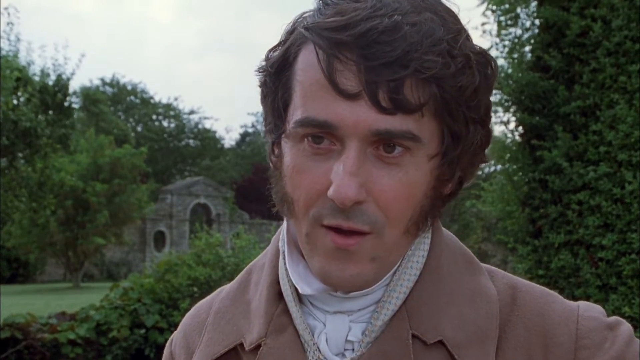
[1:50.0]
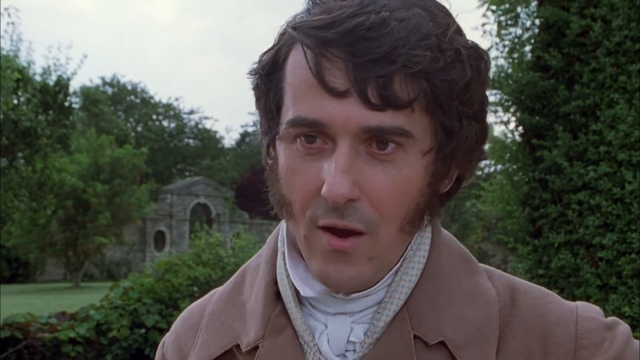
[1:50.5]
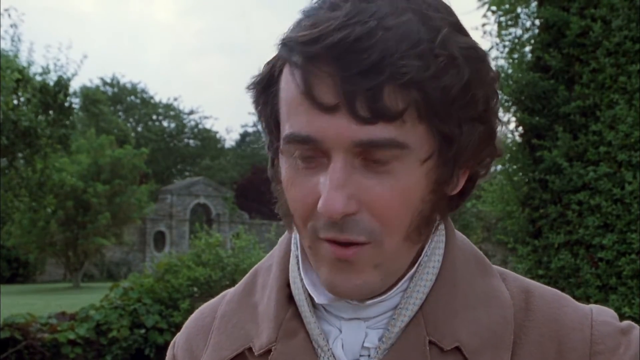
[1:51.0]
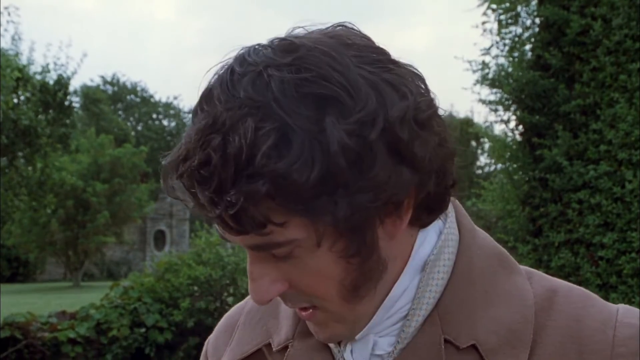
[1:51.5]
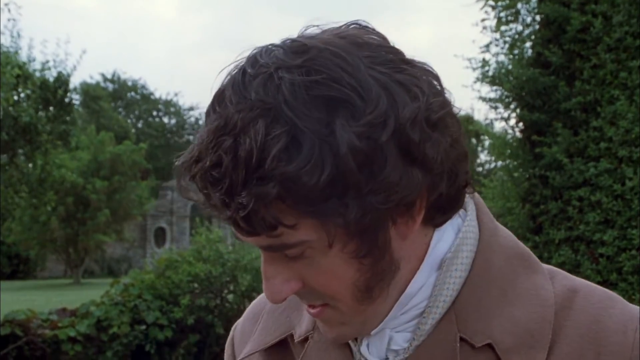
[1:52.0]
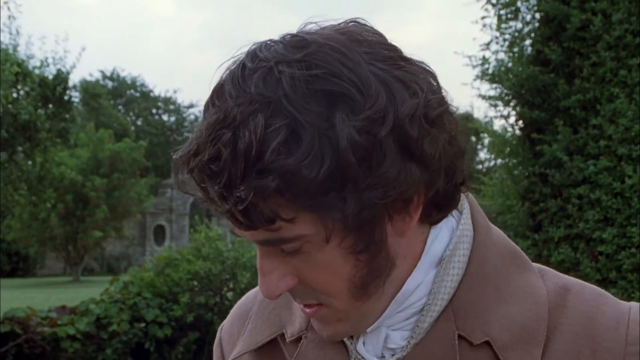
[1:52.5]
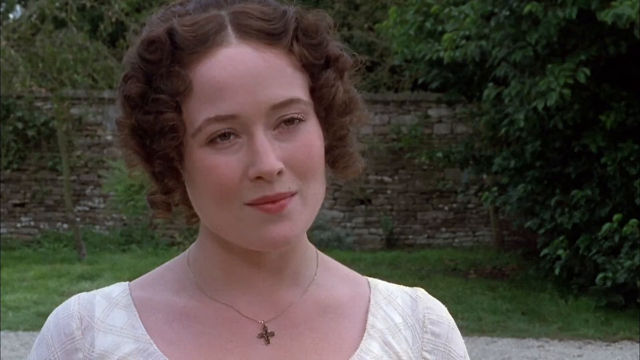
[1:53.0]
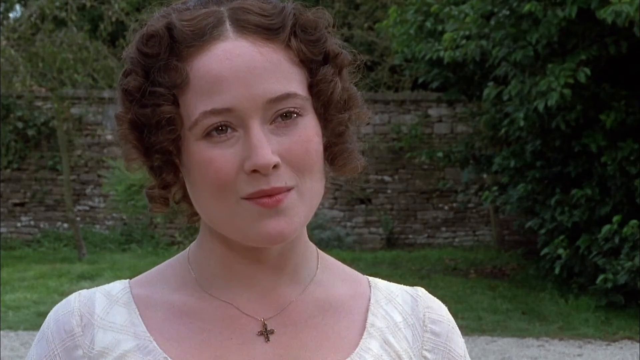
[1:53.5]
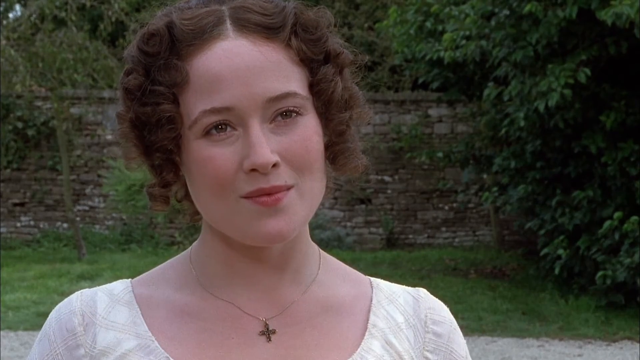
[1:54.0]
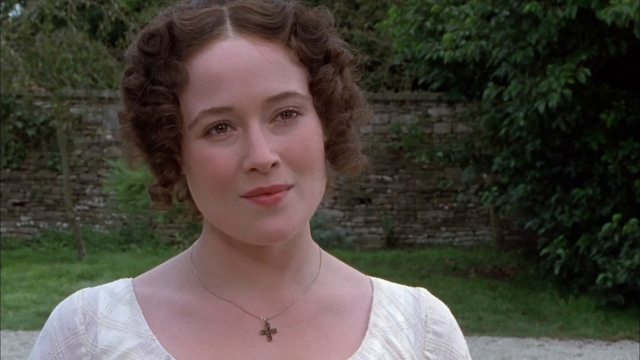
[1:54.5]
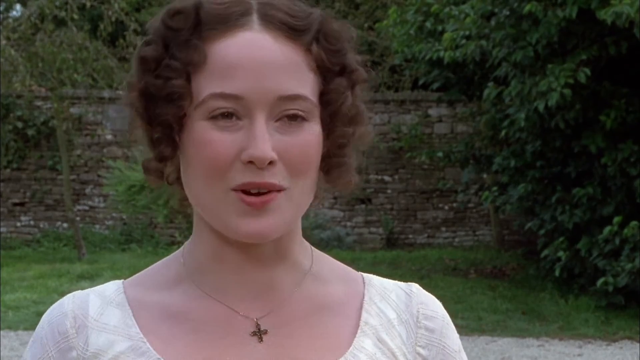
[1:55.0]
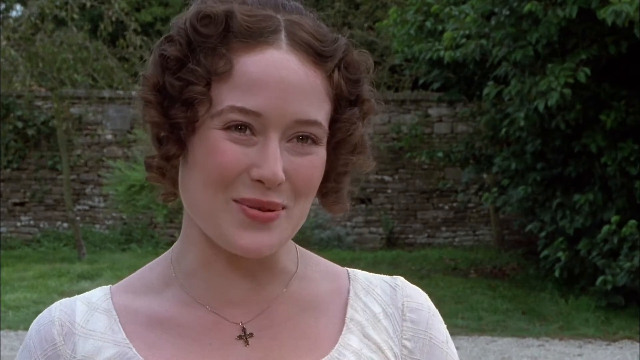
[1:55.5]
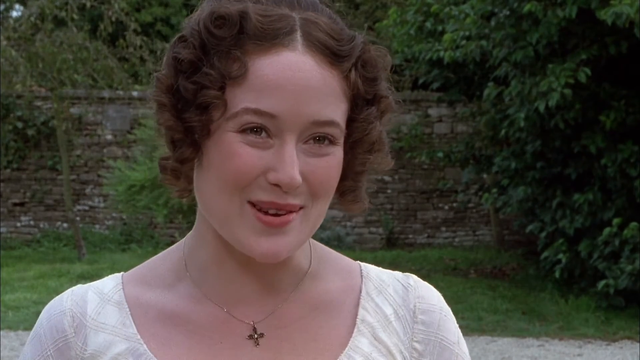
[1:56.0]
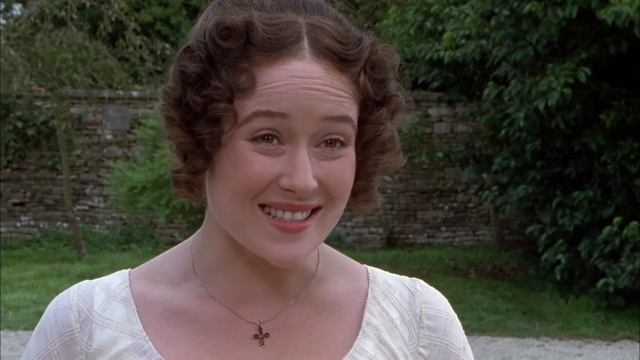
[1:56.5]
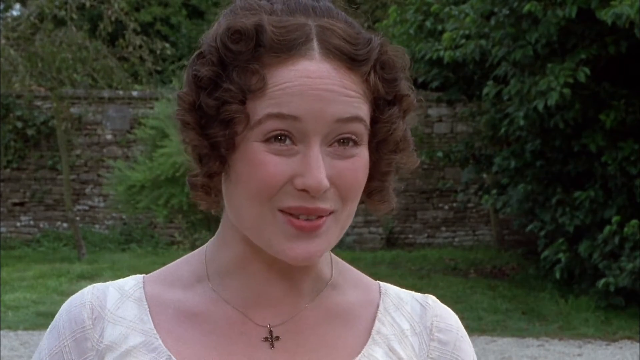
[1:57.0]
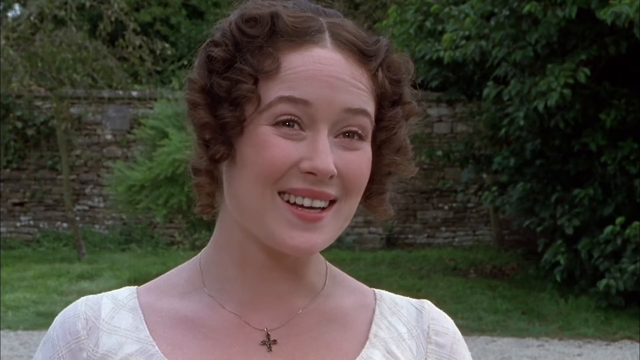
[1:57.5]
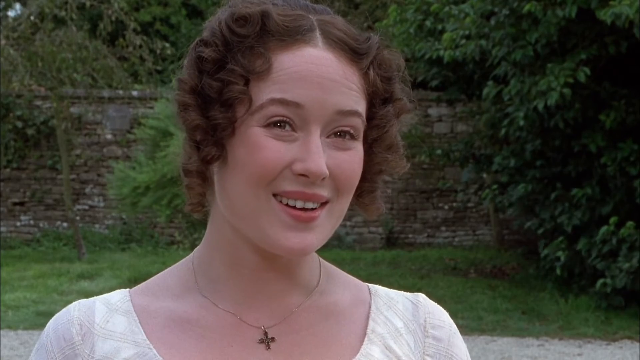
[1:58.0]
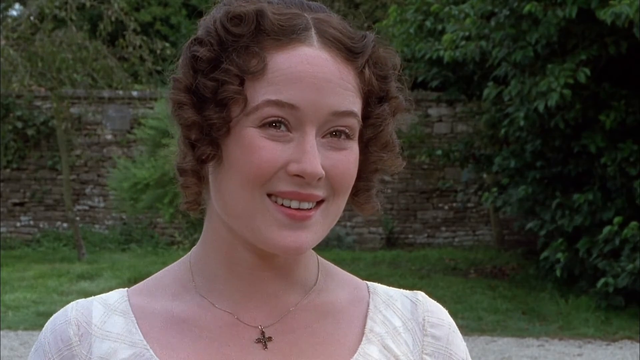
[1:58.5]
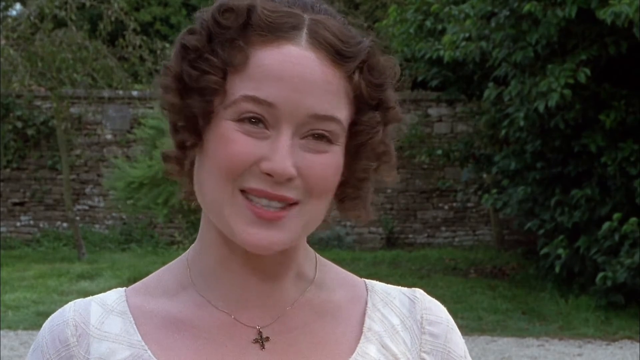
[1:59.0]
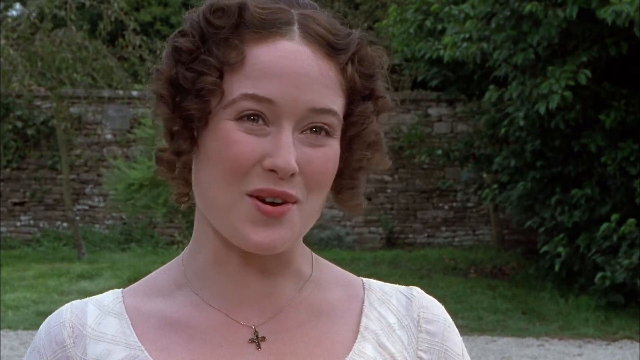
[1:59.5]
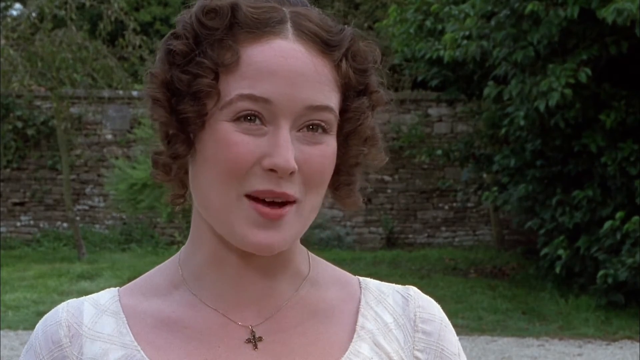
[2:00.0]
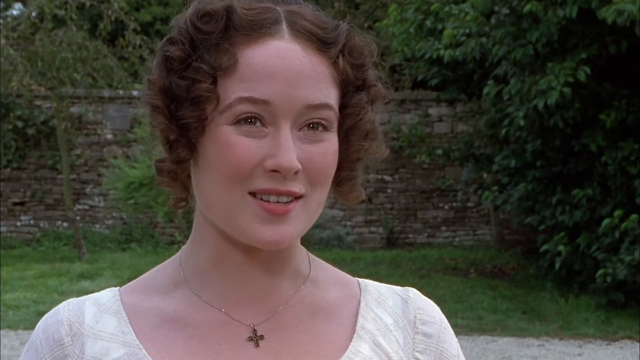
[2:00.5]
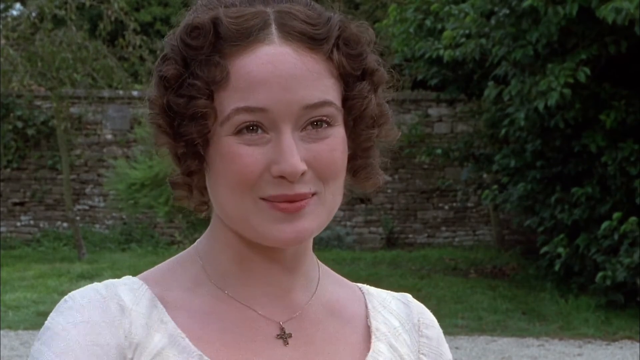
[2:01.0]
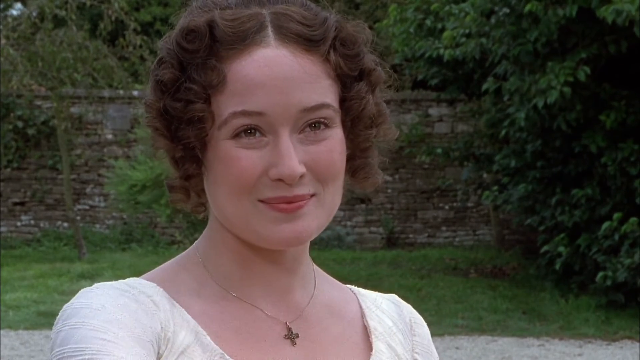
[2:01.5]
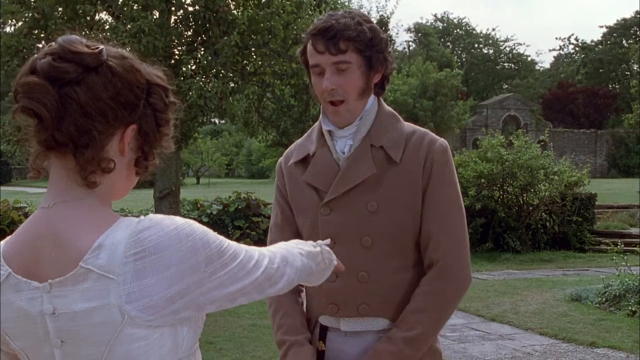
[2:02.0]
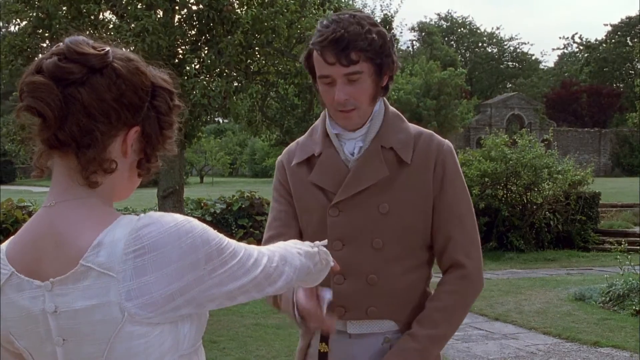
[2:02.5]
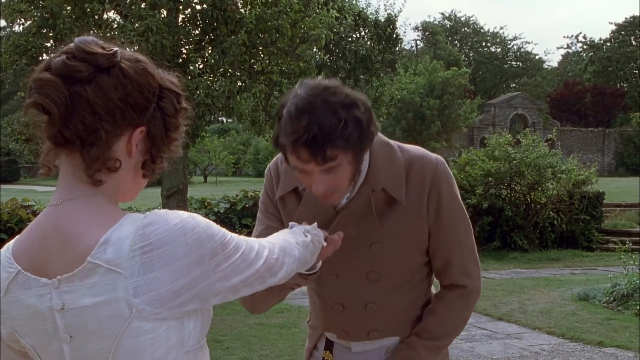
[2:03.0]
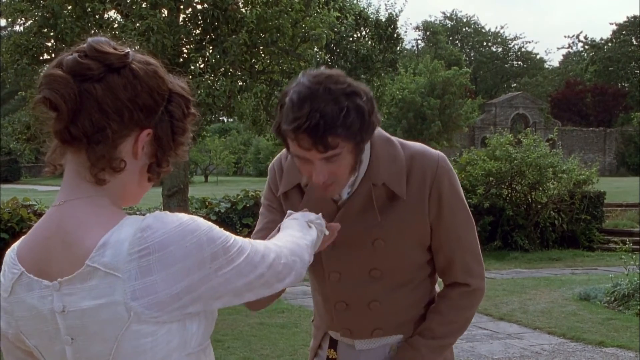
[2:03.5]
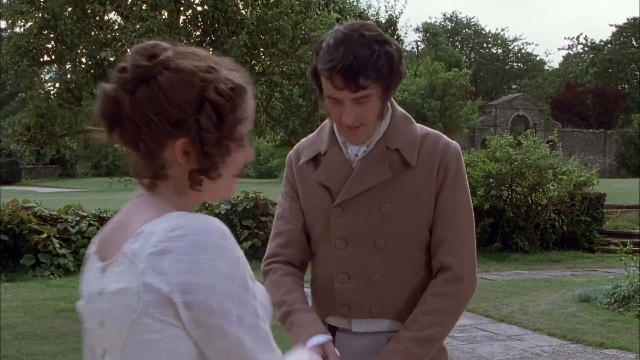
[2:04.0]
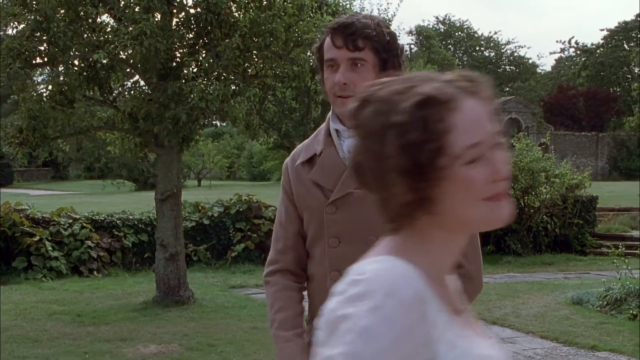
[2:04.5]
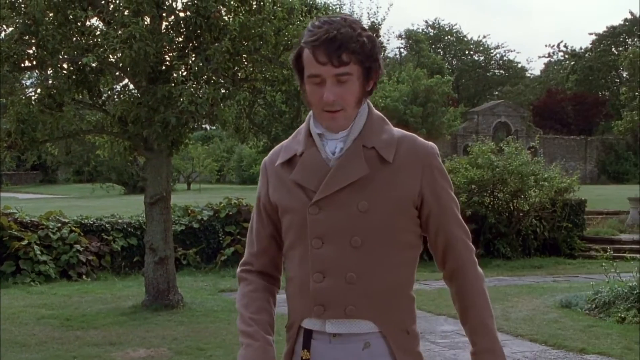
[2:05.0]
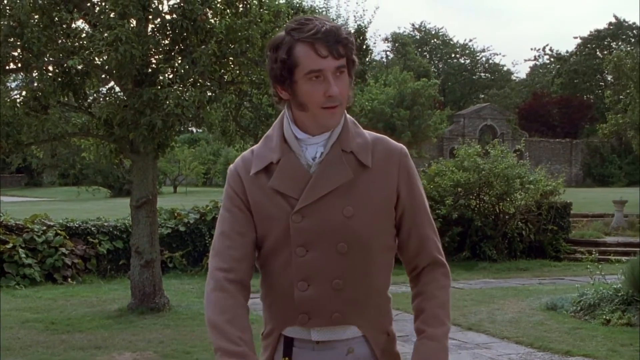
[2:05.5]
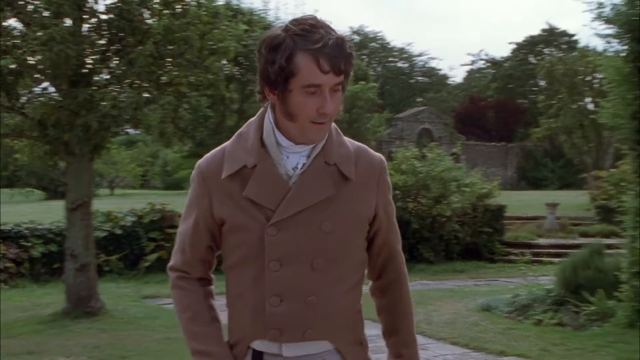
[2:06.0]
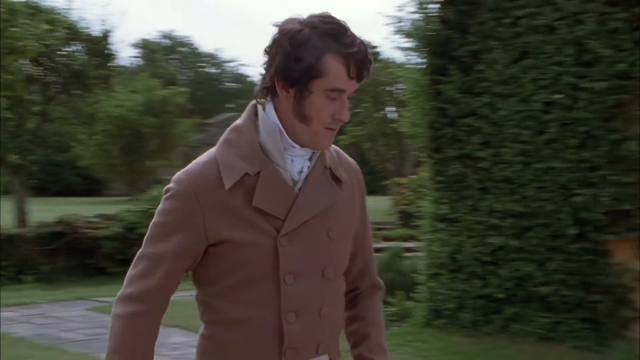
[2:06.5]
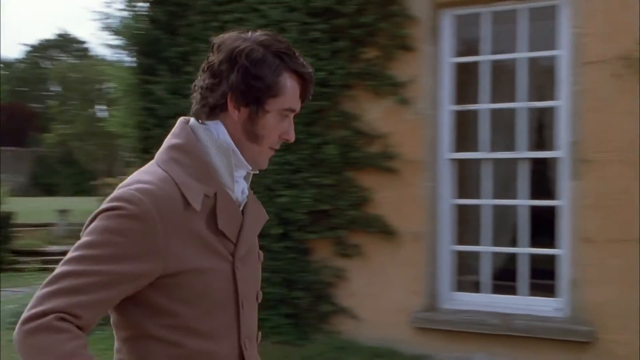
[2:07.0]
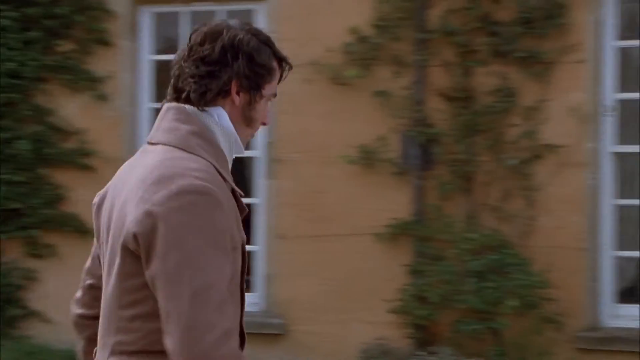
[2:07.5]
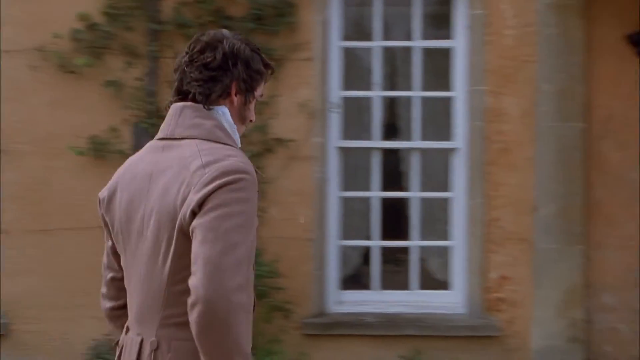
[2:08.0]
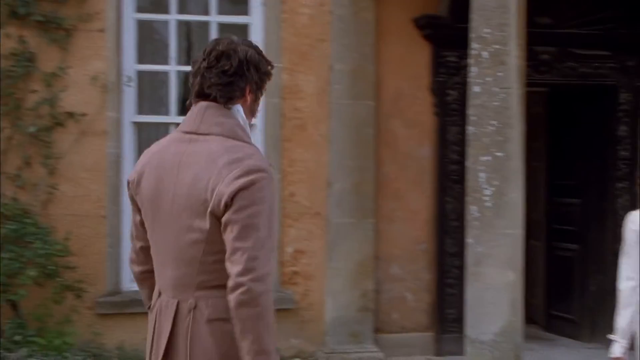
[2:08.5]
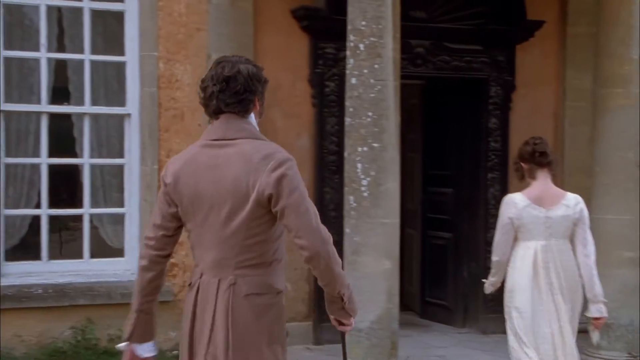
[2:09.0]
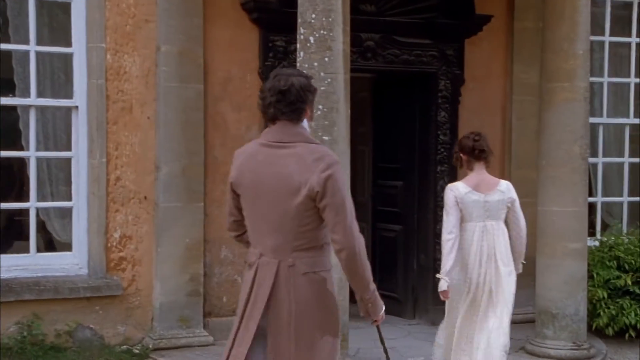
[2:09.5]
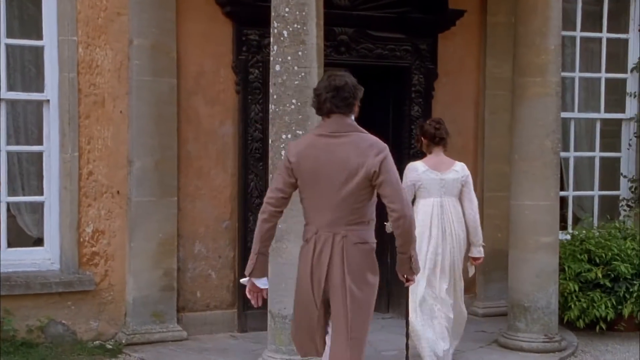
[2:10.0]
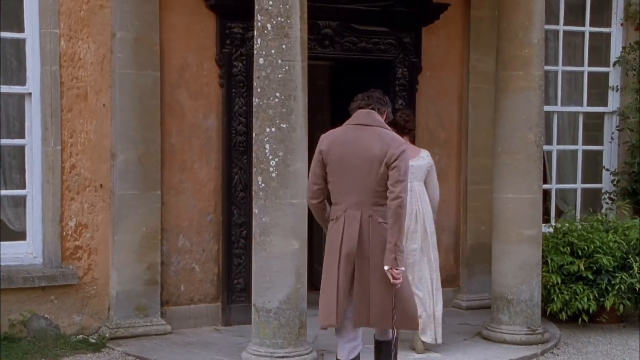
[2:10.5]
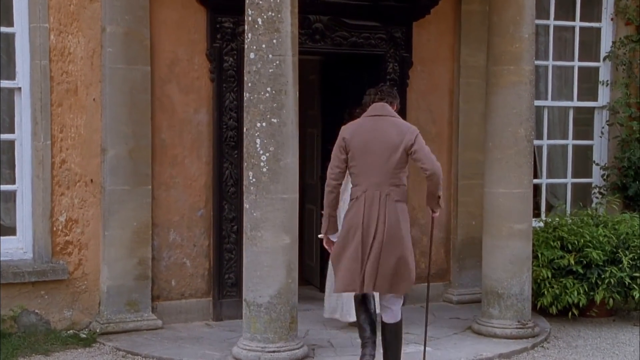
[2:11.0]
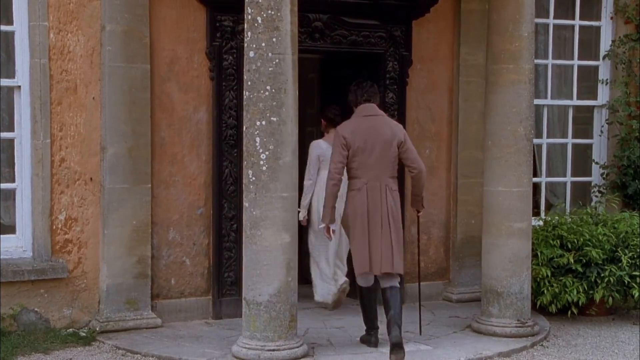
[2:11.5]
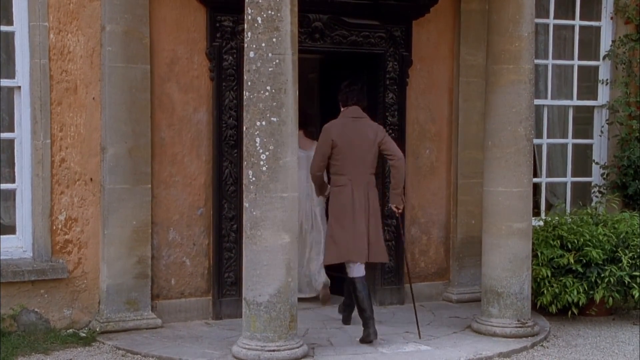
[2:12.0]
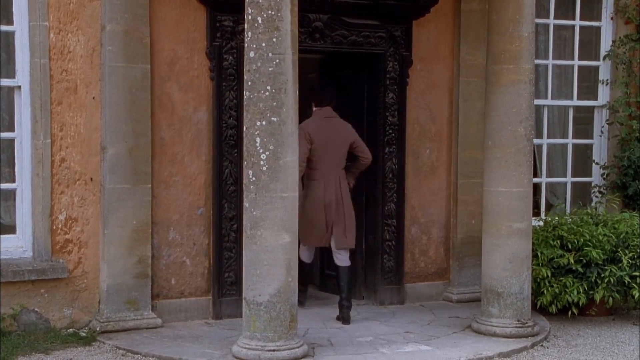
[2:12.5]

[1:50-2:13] Both stand looking at each other and talking. The lady stretches a hand toward the man, who grabs the hand and gives it back, his face looking very happy. Then they both go back inside the building, which has an old 60s-style design rather than recent construction. No message or prompt appears at the end.